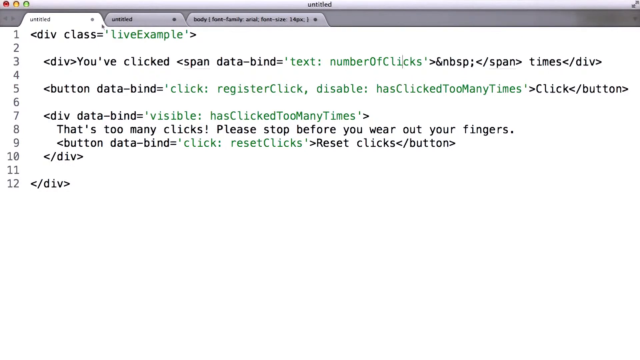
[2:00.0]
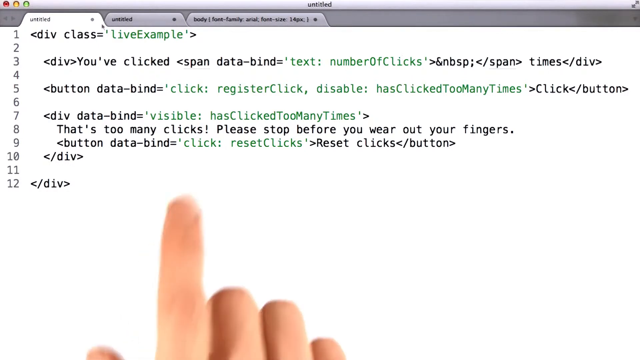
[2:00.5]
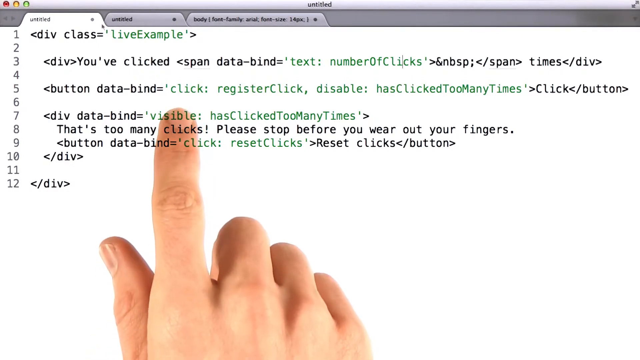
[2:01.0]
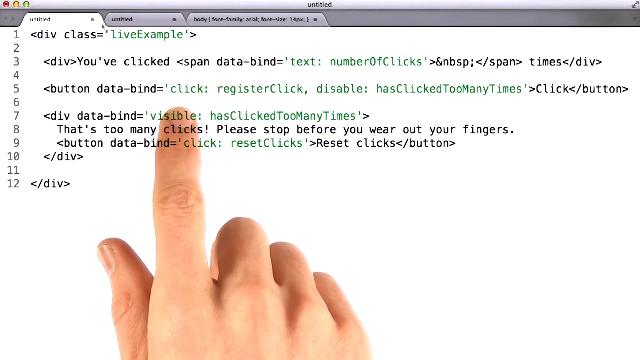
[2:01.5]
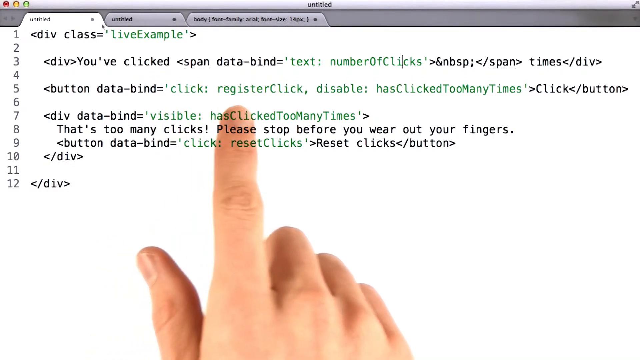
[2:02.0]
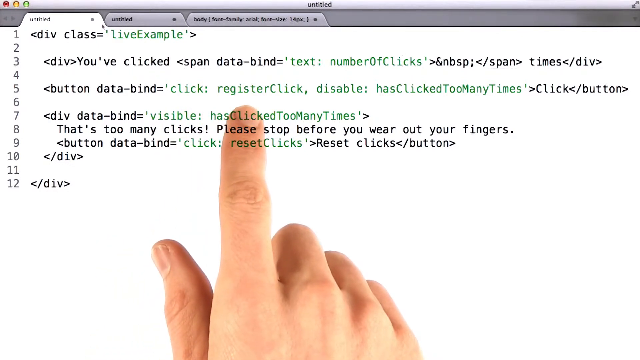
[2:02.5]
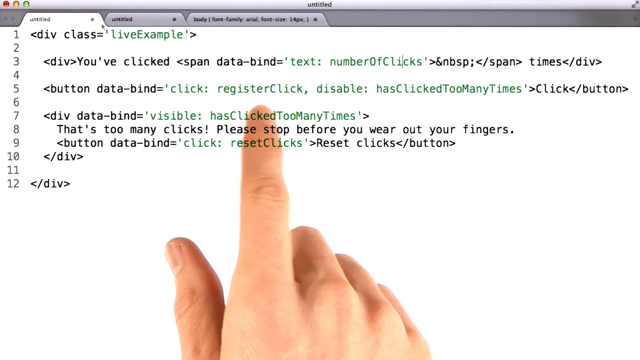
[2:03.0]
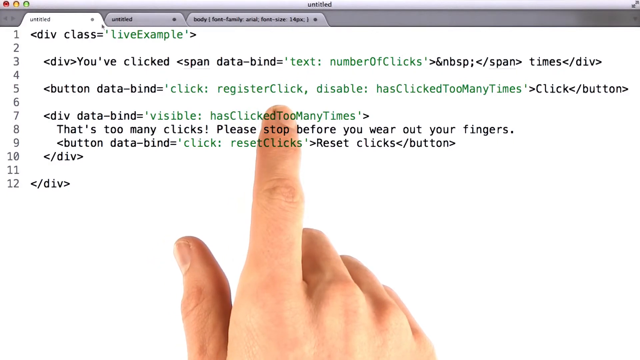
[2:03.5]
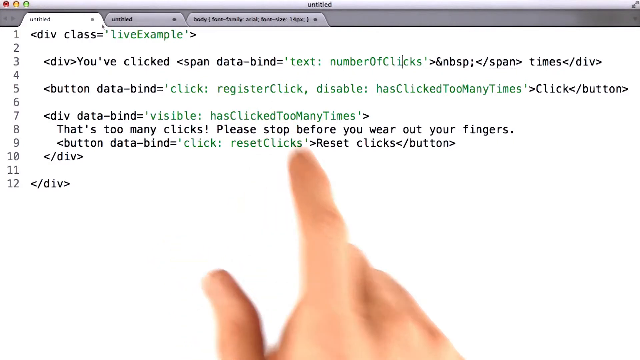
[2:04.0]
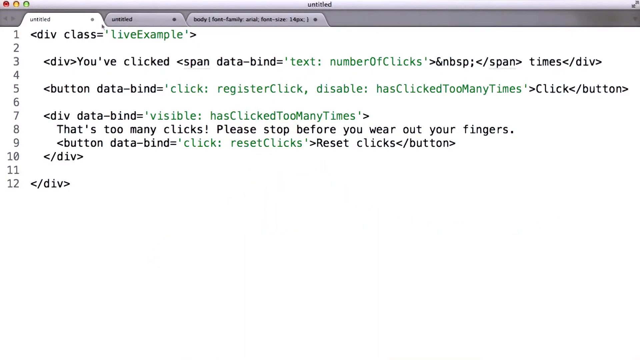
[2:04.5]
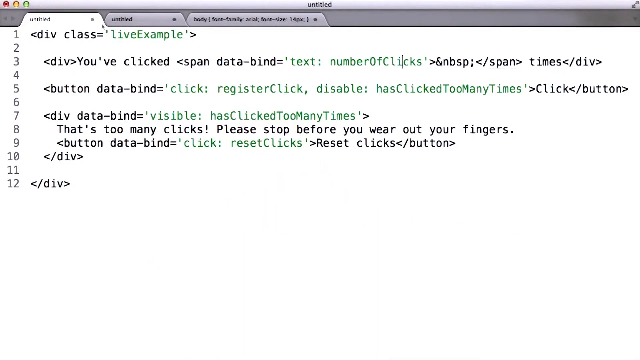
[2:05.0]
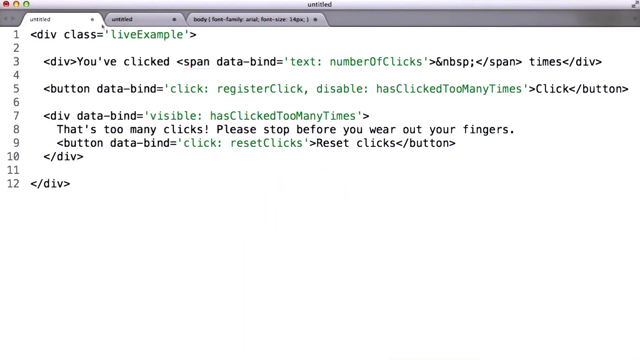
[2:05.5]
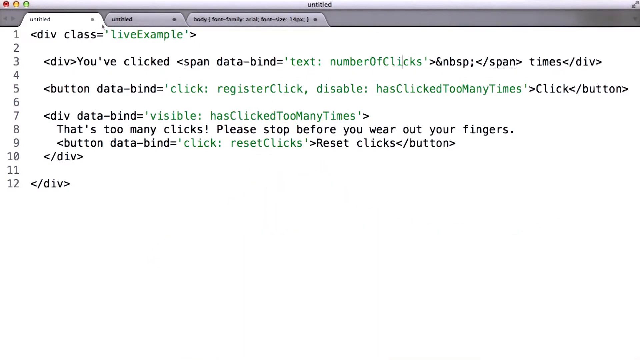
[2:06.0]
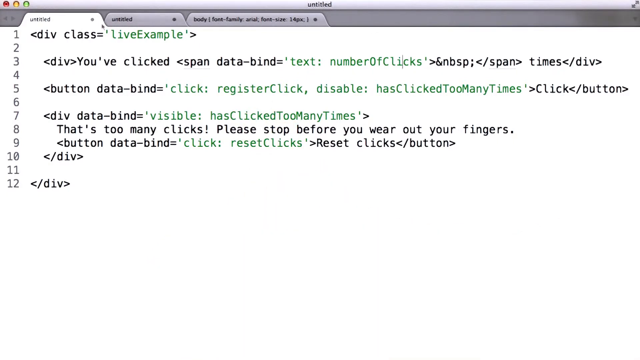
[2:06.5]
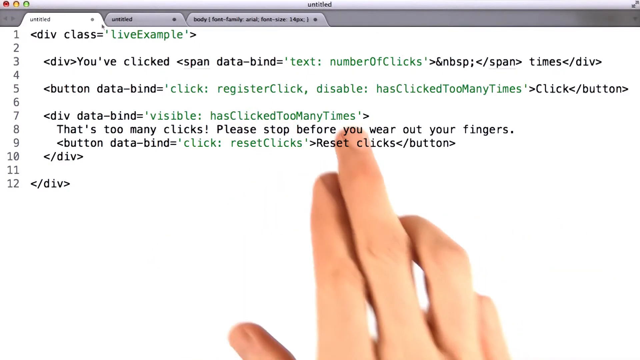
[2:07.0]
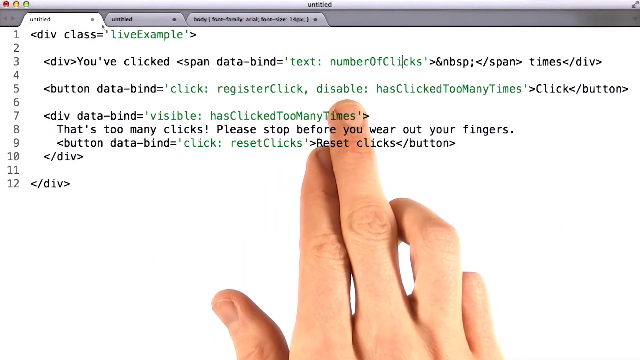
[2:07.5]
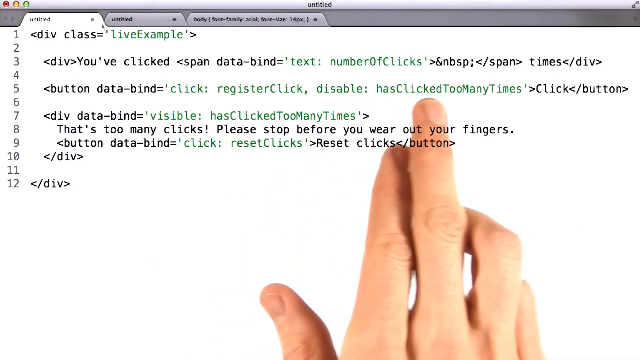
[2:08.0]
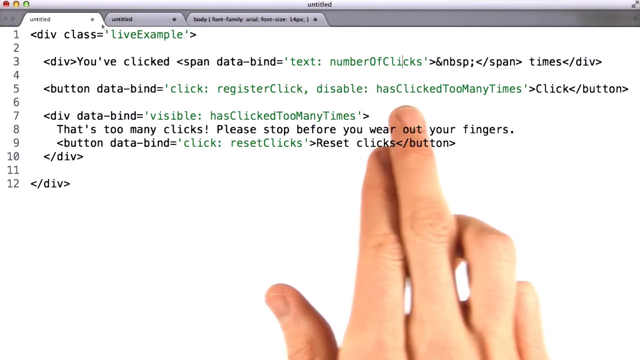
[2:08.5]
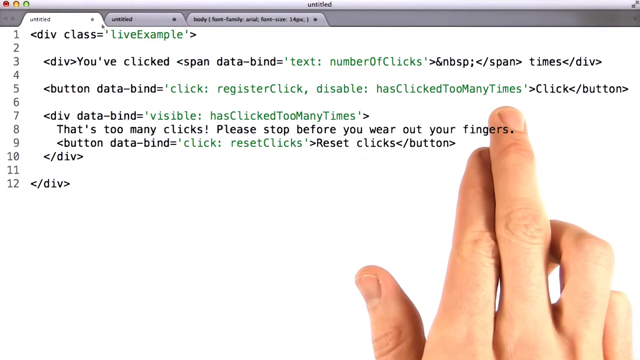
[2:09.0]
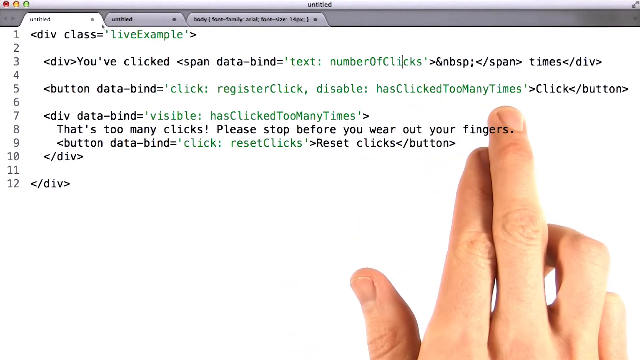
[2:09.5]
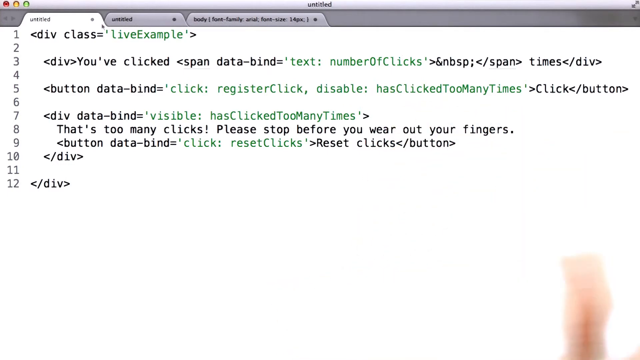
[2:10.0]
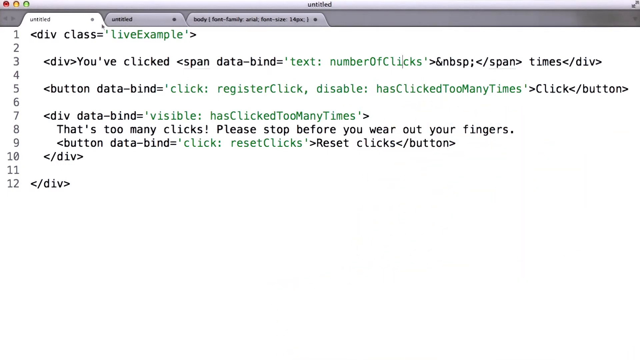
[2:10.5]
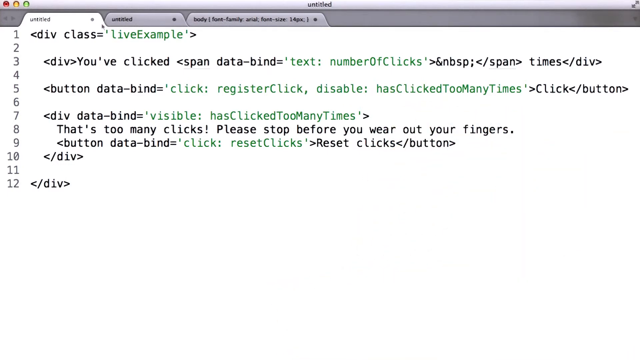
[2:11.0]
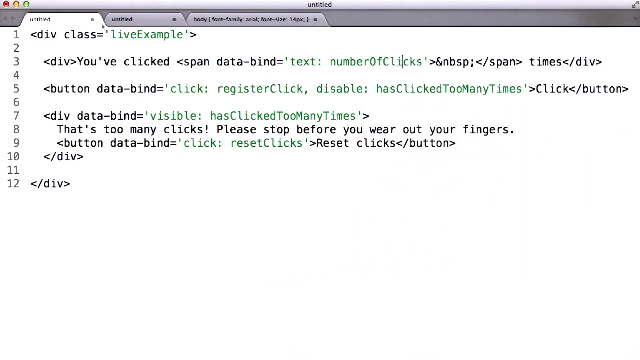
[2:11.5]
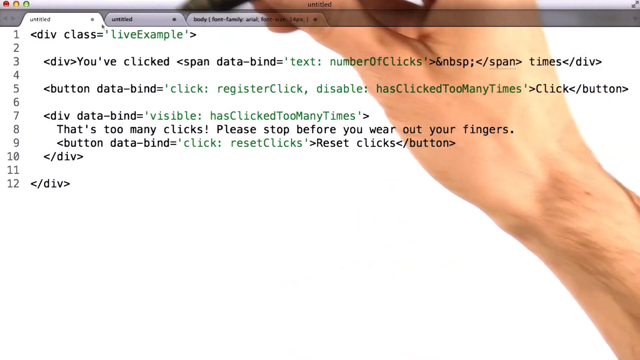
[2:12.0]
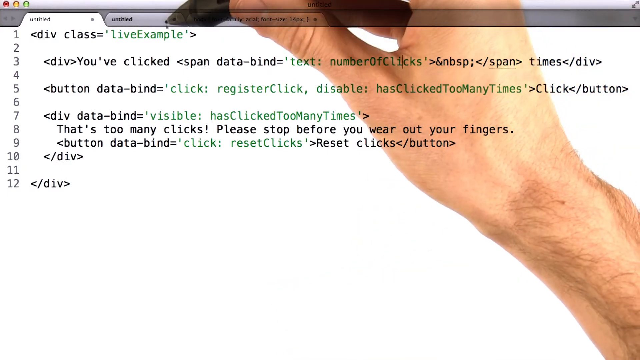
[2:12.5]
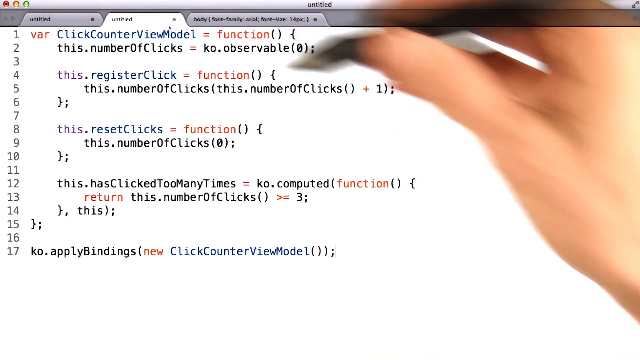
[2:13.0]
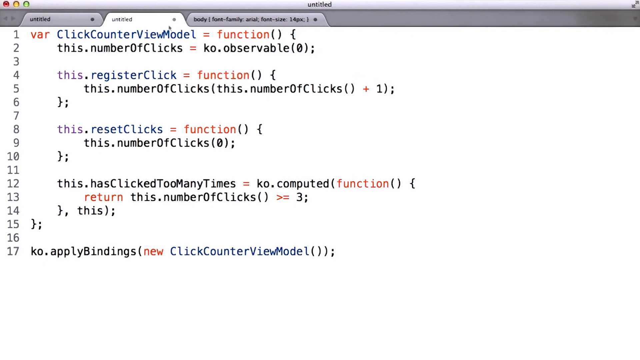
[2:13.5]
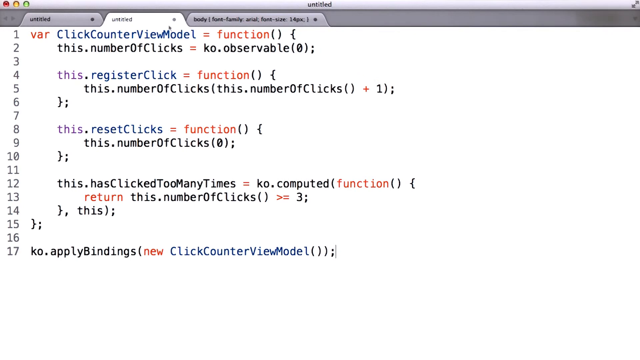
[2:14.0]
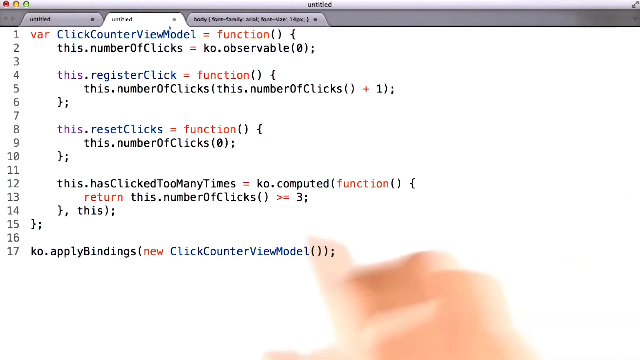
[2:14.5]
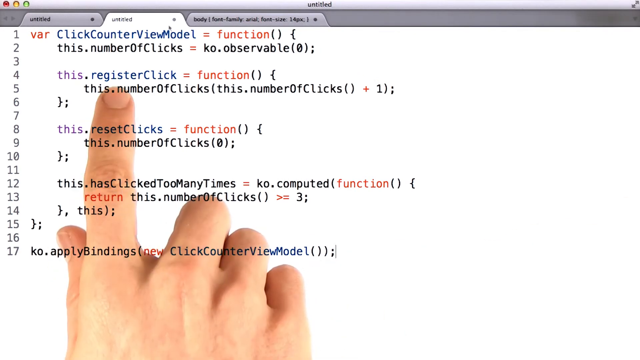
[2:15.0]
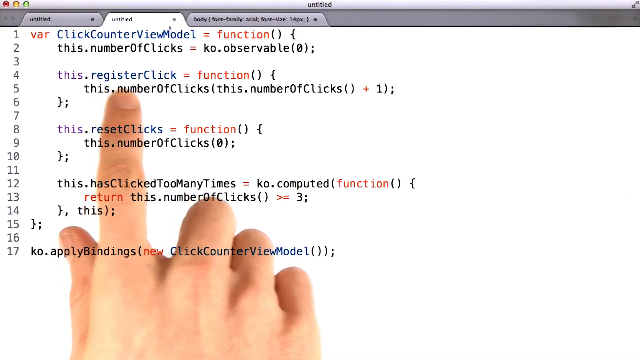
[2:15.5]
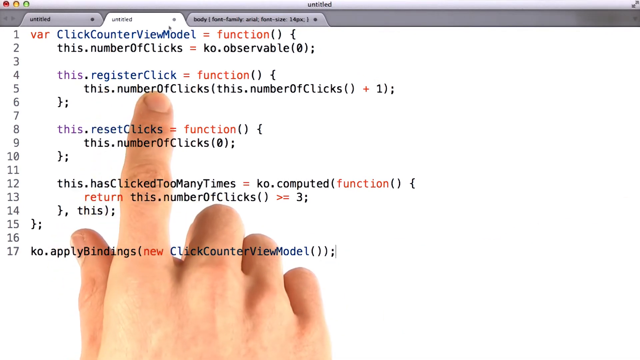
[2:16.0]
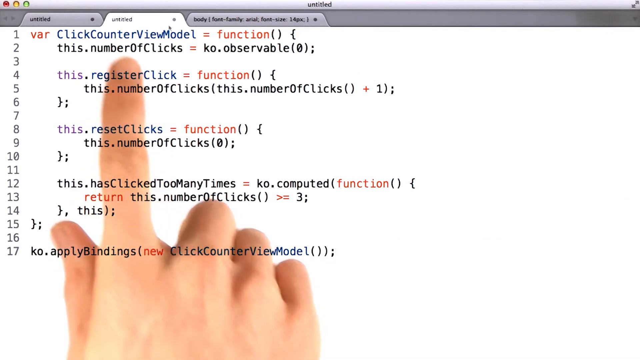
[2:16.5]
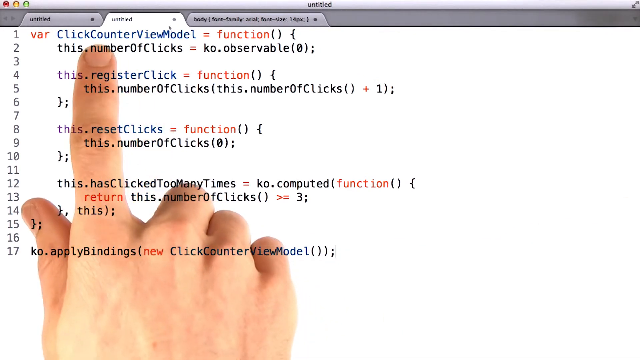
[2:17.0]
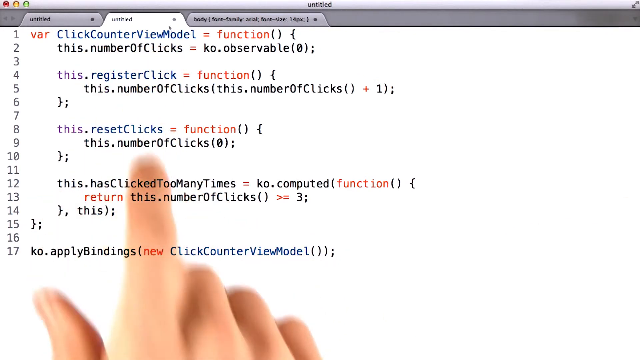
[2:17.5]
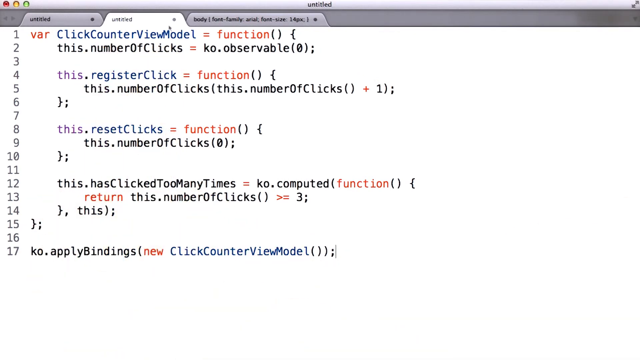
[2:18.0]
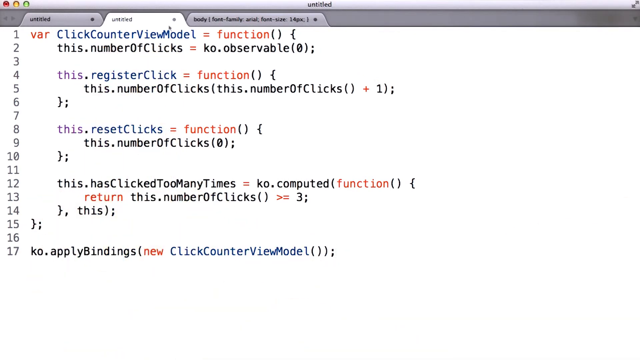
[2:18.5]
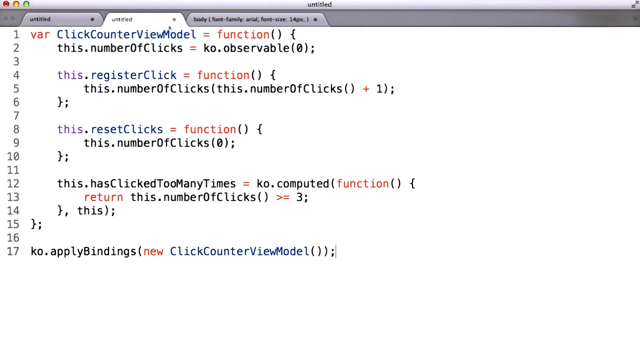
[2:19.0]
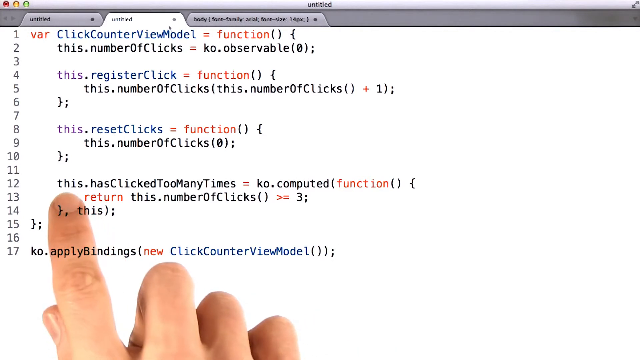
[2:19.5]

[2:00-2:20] The page with "click: register click, disable" is shown, and the hand is back. Text includes "div class = live example" and "You've clicked span data-bind = text:". The view then moves to the actual coding page, which reads: "click counter view model = function", "this.number of clicks = ko.observable(0)", "this.register click = function() { this.number of clicks(this.number of clicks() + 1);", "this.reset clicks = function() { this.number of clicks(0);" and "this.has clicked too many times = ko.computed(function() { return this.number of clicks() >= 3".